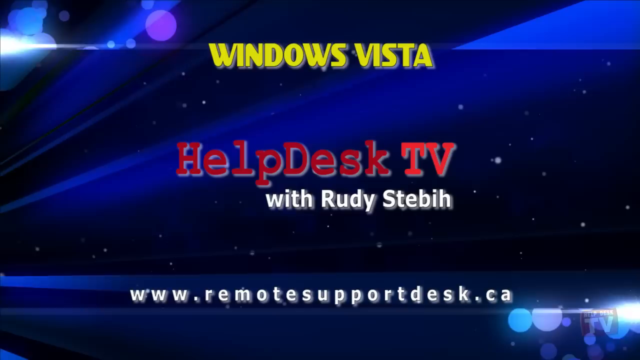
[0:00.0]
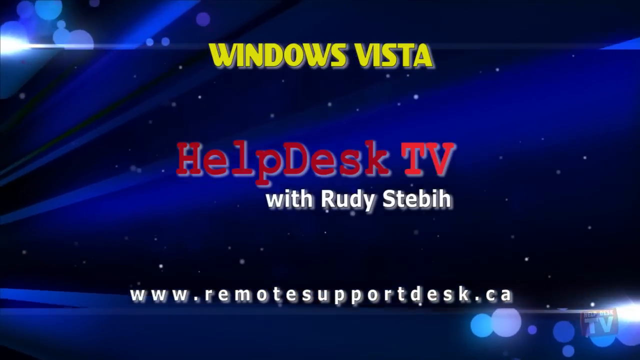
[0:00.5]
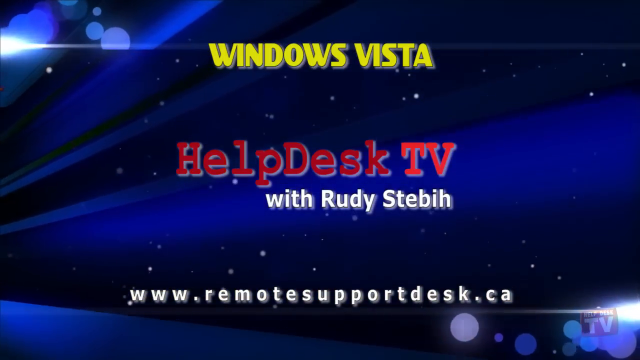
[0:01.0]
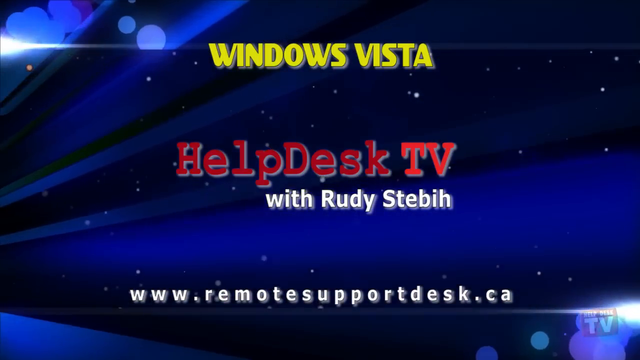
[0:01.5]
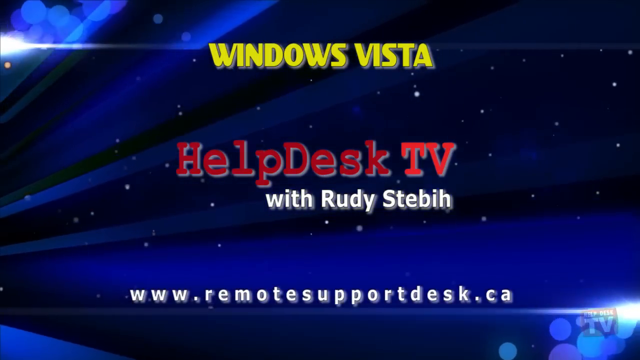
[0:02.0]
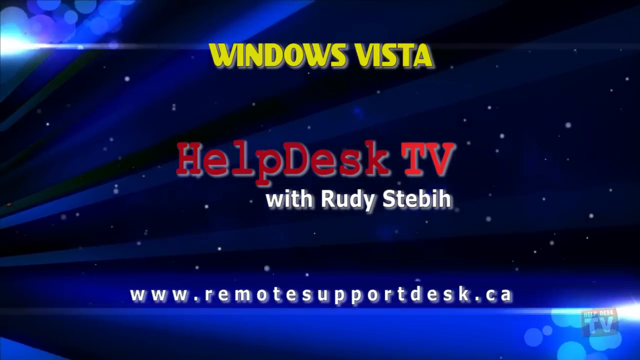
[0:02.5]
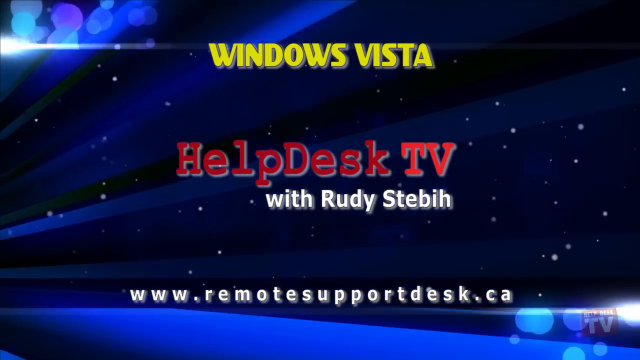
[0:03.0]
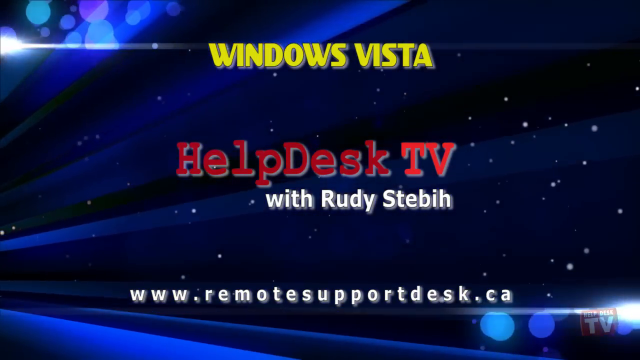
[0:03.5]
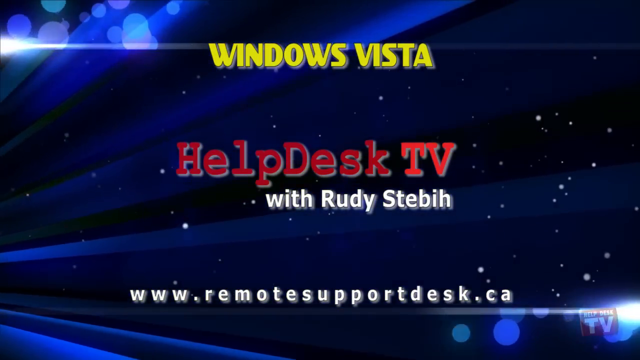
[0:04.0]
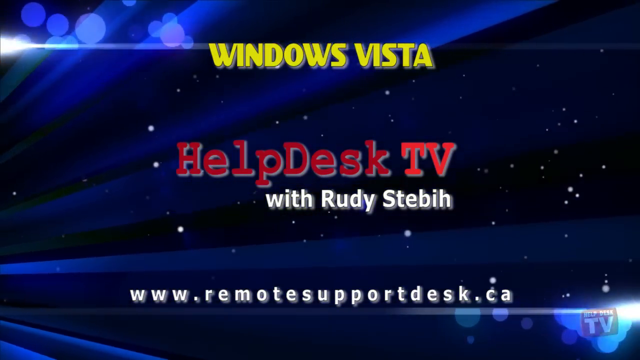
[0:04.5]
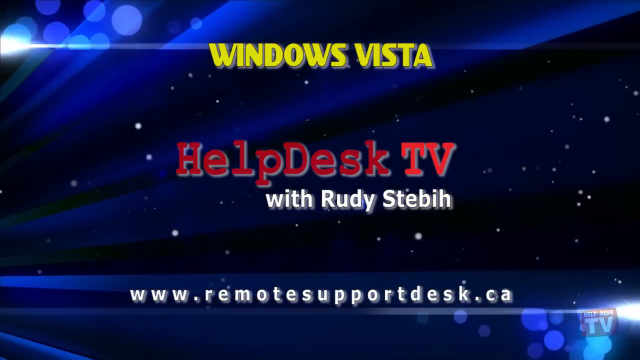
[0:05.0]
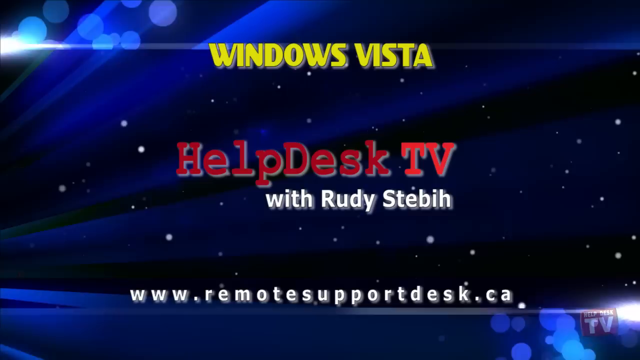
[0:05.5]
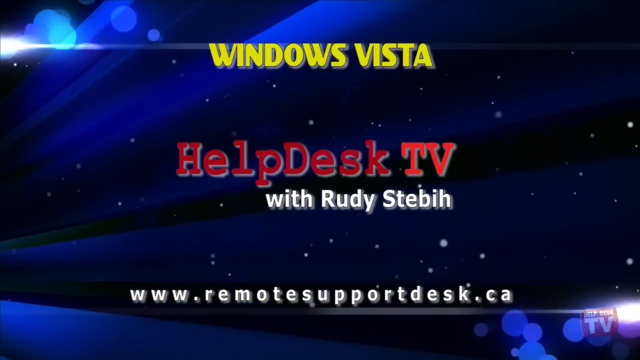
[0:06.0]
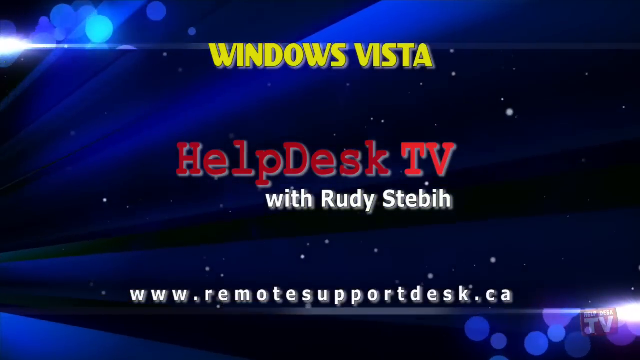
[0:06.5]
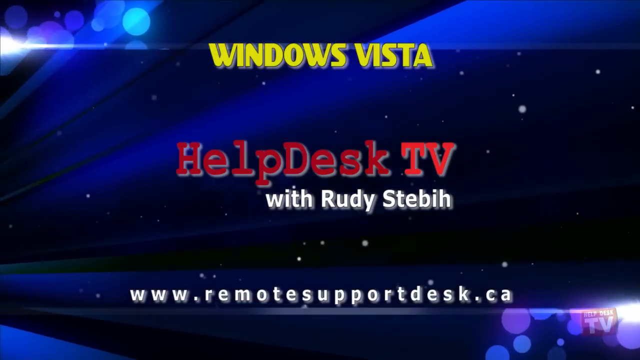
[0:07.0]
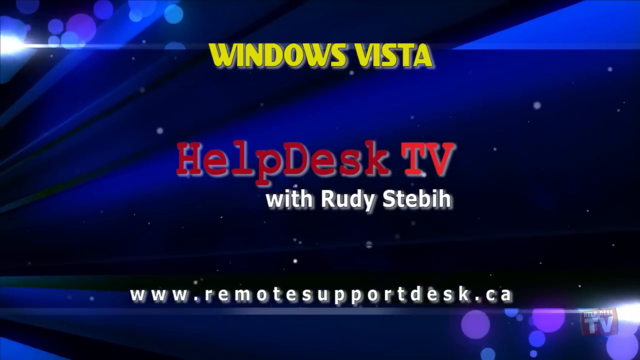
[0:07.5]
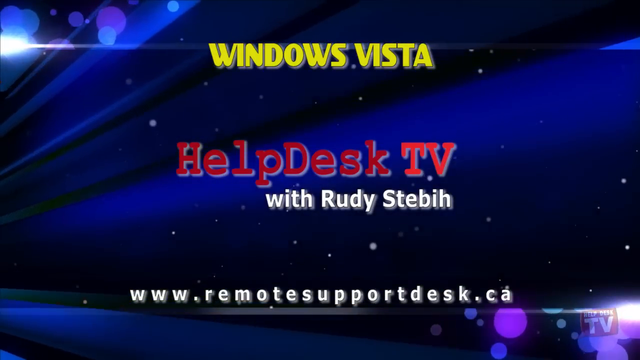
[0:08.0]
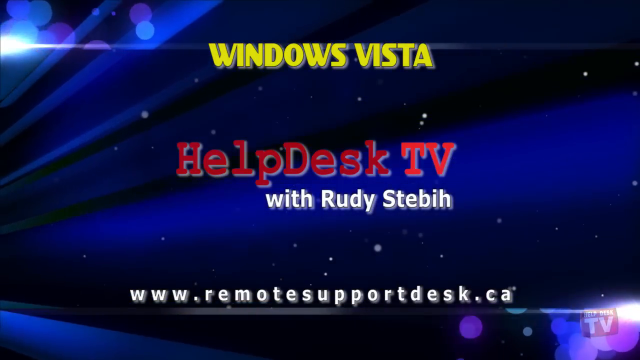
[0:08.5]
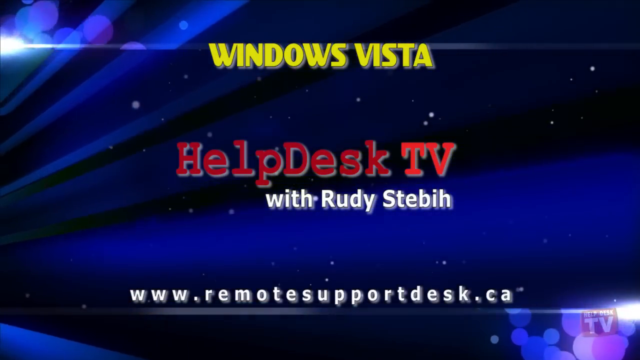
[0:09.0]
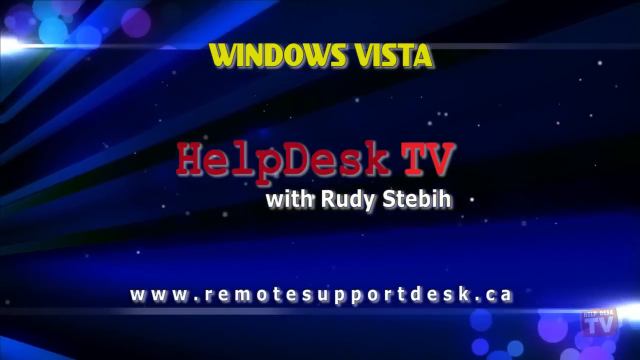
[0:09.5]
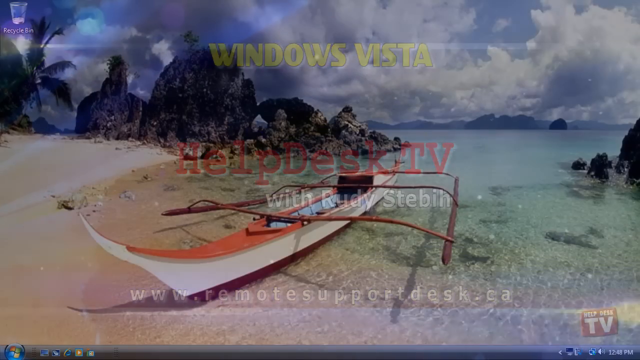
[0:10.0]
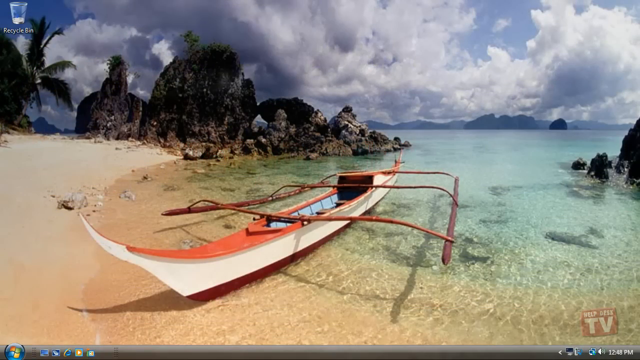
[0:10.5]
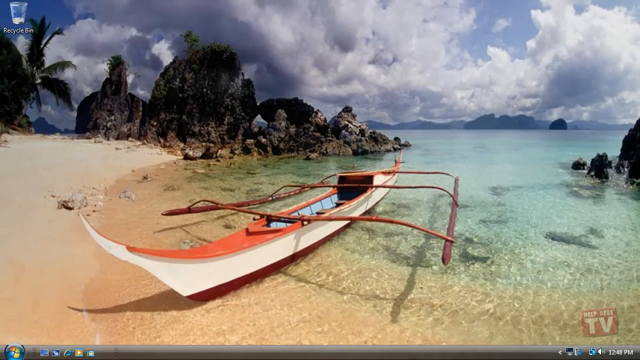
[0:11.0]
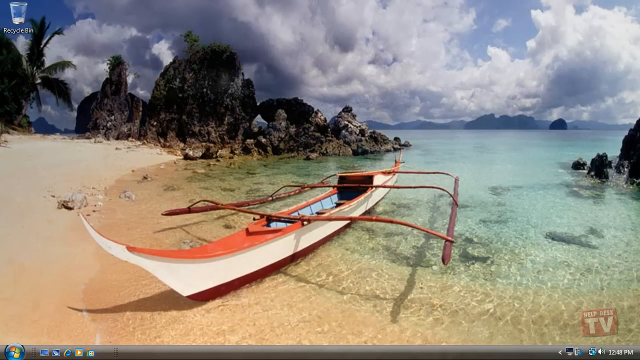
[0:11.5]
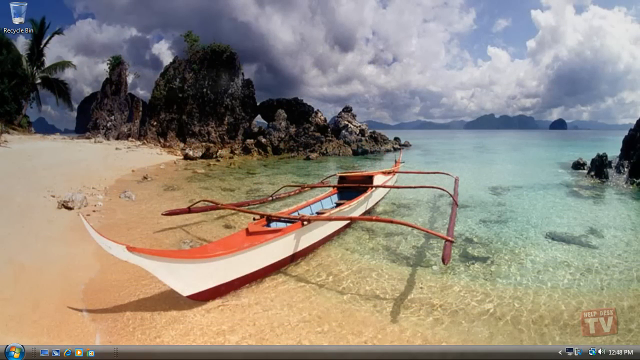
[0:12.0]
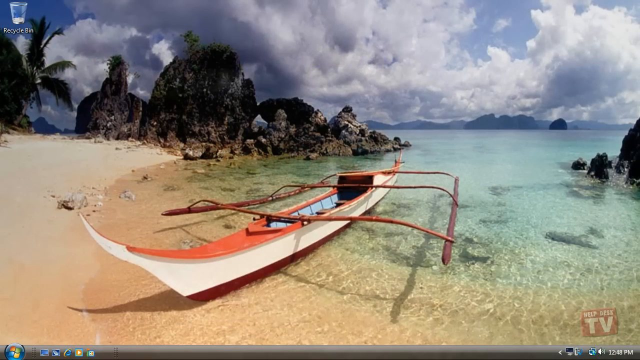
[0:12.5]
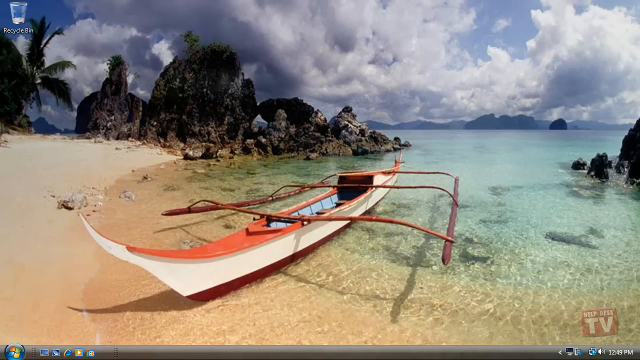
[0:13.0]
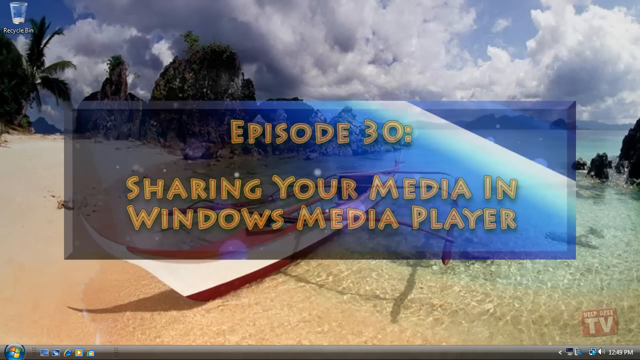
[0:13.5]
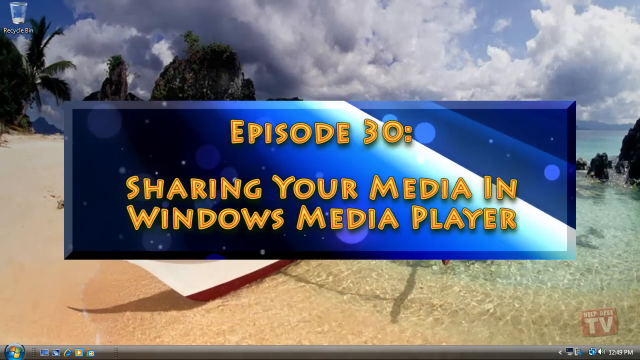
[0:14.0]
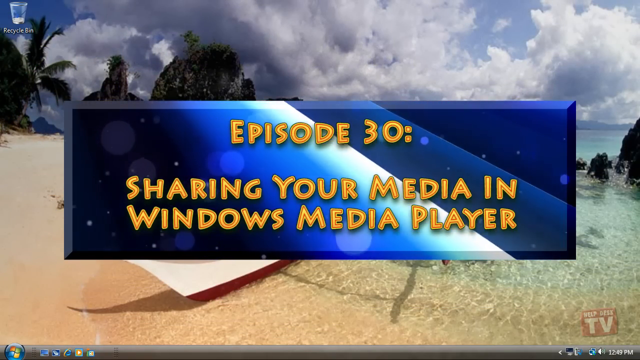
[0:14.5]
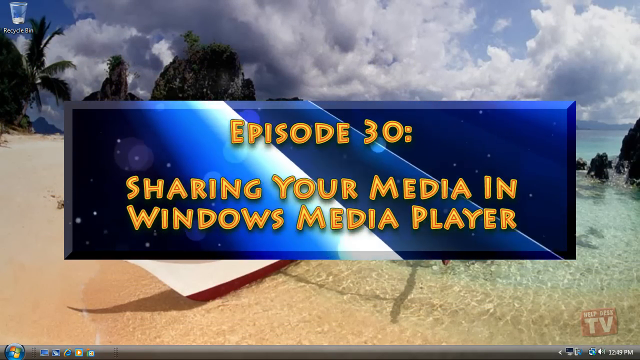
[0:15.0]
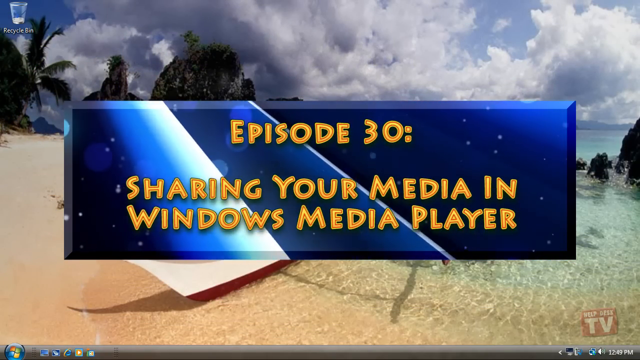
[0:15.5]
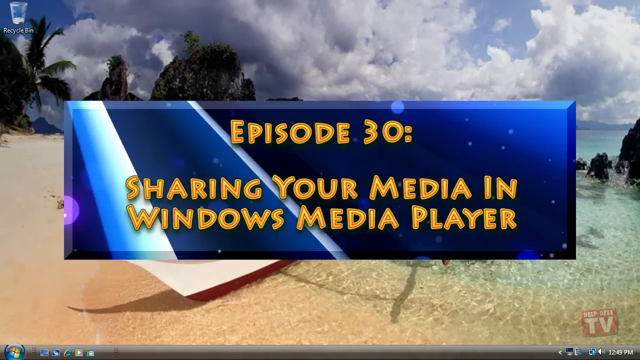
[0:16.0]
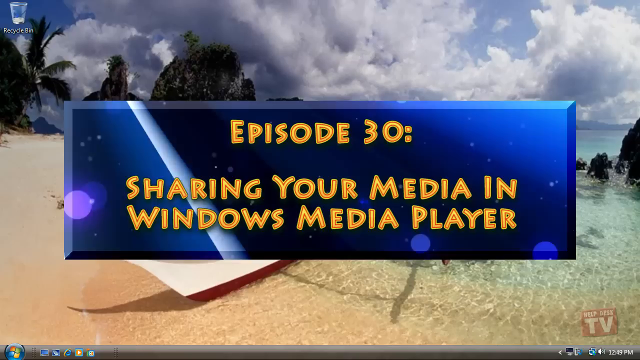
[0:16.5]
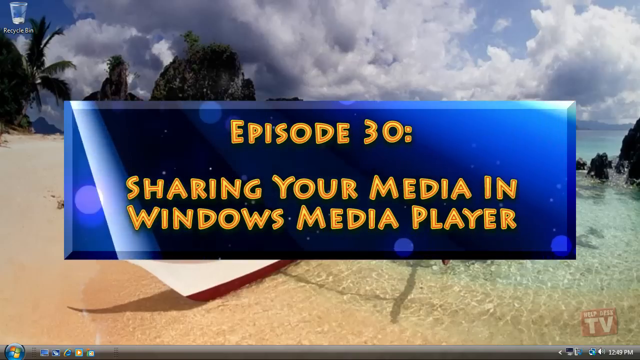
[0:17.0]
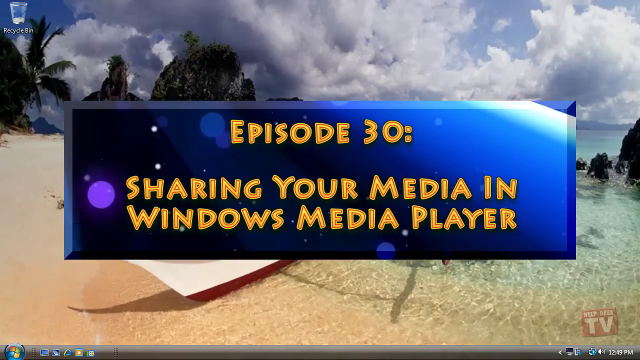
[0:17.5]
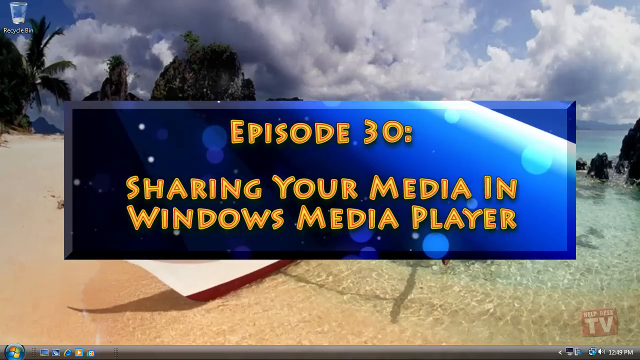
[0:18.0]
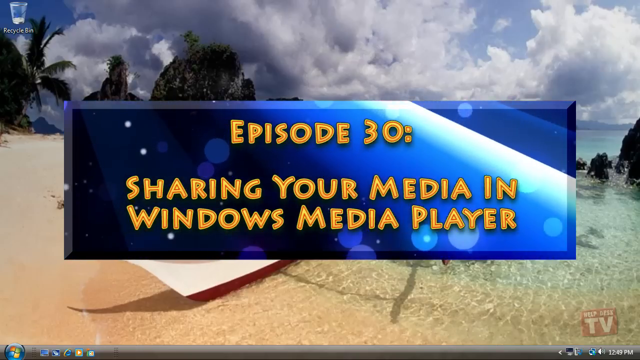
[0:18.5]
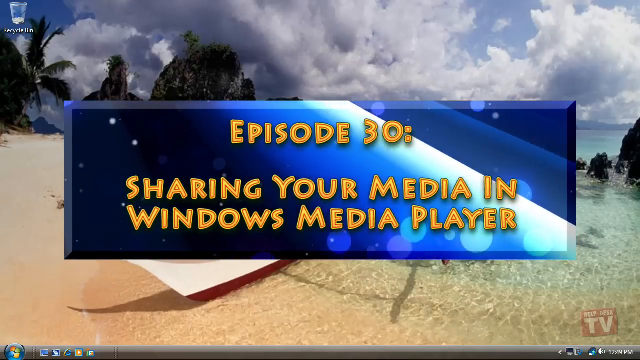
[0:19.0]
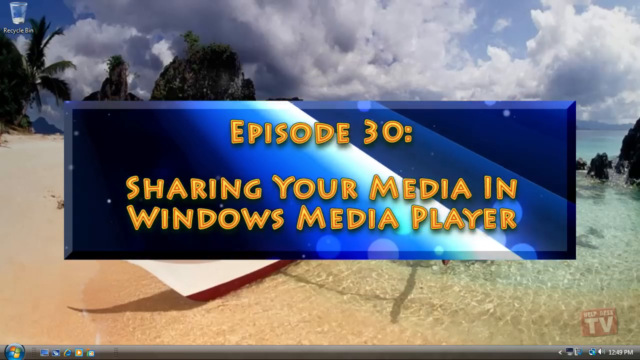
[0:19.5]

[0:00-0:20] A dark blue background that looks somewhat like sky forms an intro page for what looks like a help video for Windows Vista. At the very top of the screen, in yellow, all-capital, retro-style letters, is "Windows Vista". In the middle of the page is "Help Desk TV" in red, the largest font on the page; "TV" is in capital letters and slightly brighter than "Help Desk". Beneath it, in white letters, is "With Rudy Stebih", spelled S-T-E-B-I-H, and at the bottom, in white, is the web address "www.remotesupportdesk.ca". The background is a vintage Windows background, dark blue and sky-like, with some stars and geometric shapes. In the top left corner is a white graphic that looks like it might be a flame giving off light blue and white bubble-like shapes. The intro stays on screen for about 10 seconds, then cuts to a desktop background. The Windows recycle bin icon is in the upper left corner, and the background appears to be a tropical island, looking out over a bay with a boat parked on the shore on a sunny day with clouds in the sky. After a couple of seconds, a pop-up appears in the middle of the screen with the same dark blue, starry background as the intro page. Its text says "episode 30, sharing your media in Windows Media Player", and it remains on screen for the rest of the shot.